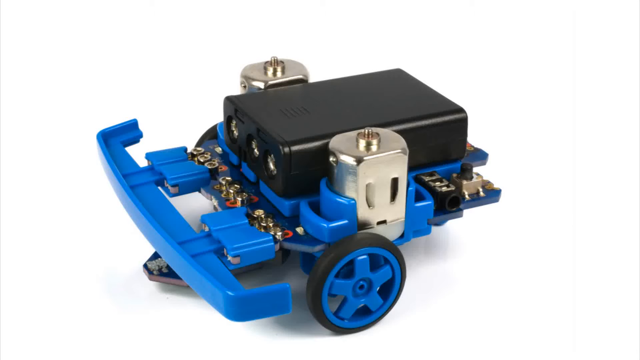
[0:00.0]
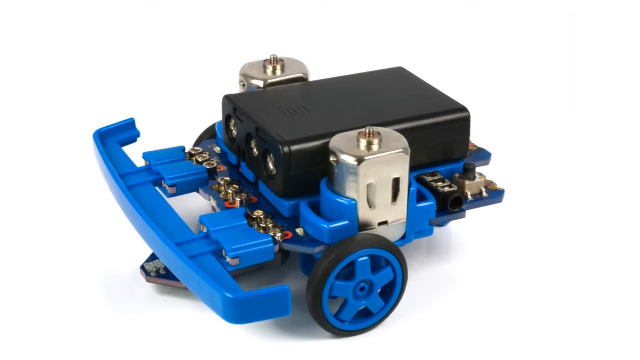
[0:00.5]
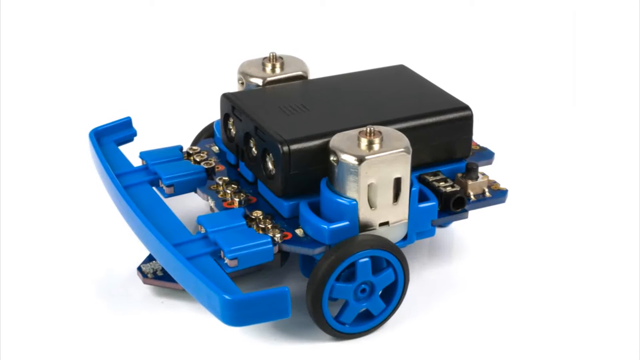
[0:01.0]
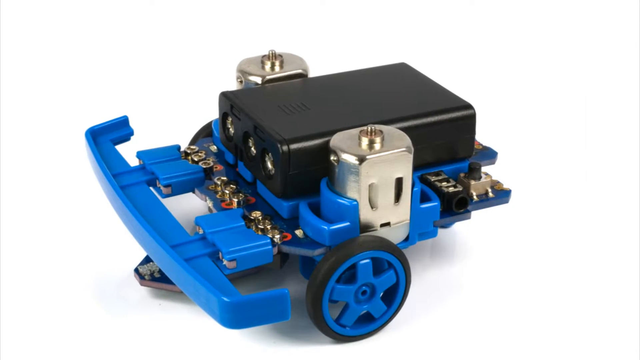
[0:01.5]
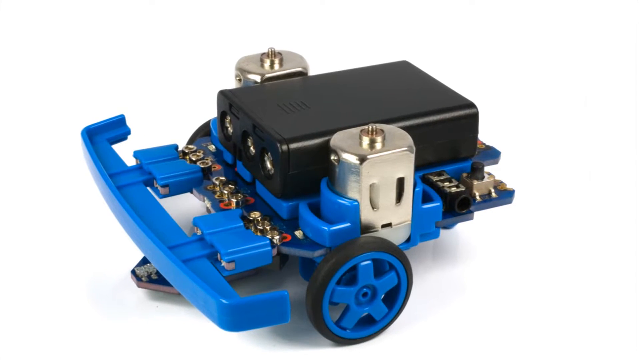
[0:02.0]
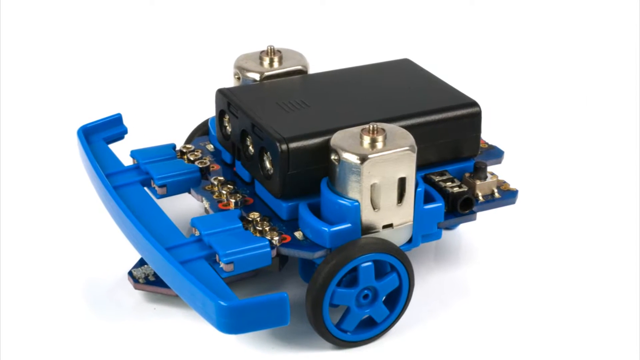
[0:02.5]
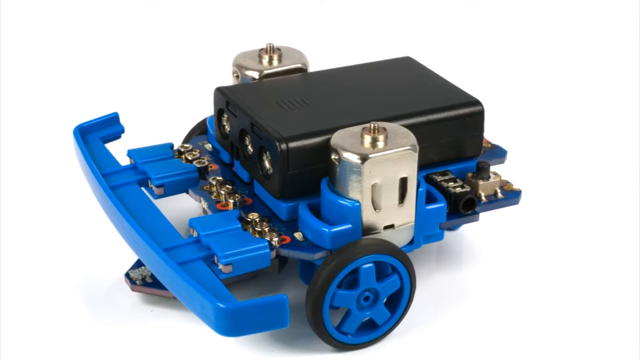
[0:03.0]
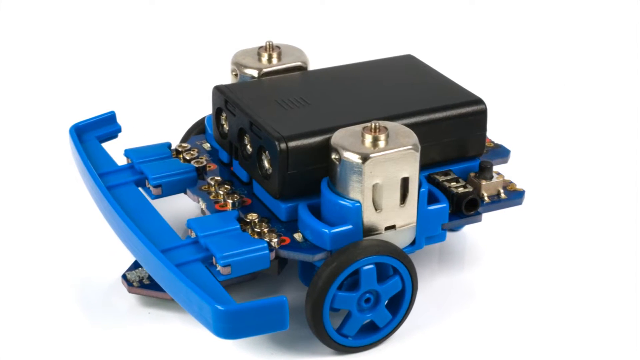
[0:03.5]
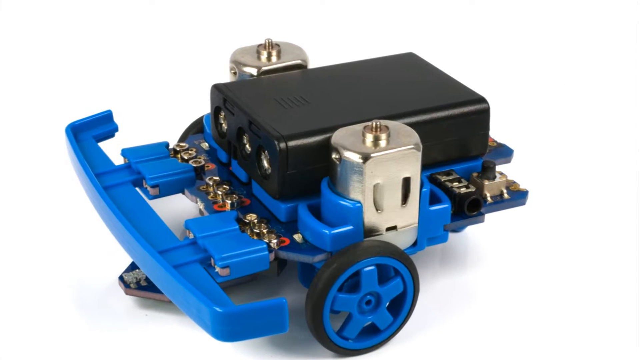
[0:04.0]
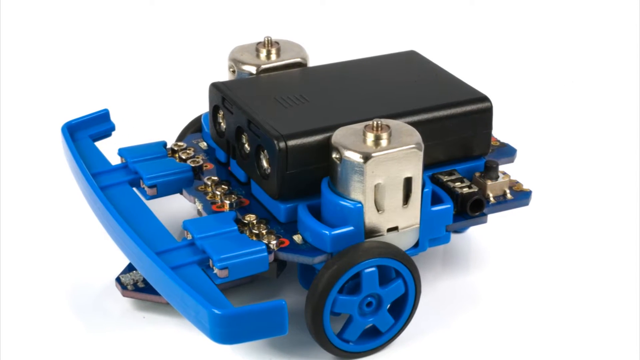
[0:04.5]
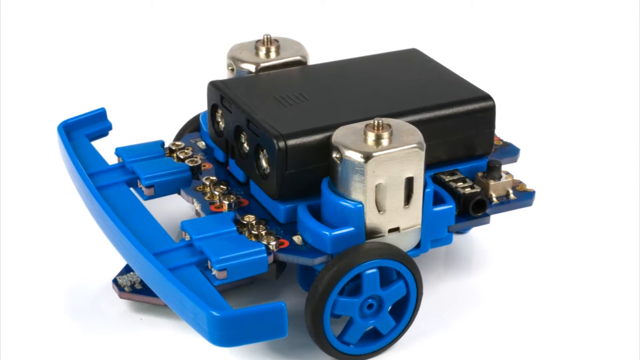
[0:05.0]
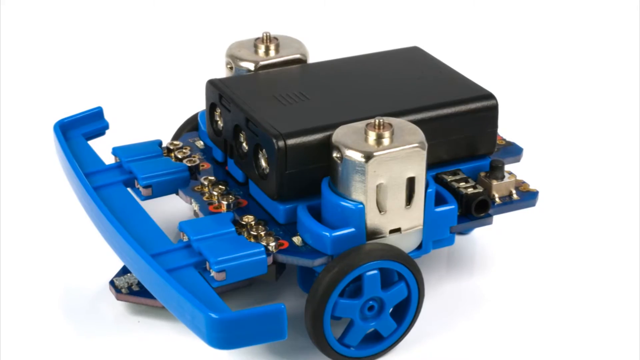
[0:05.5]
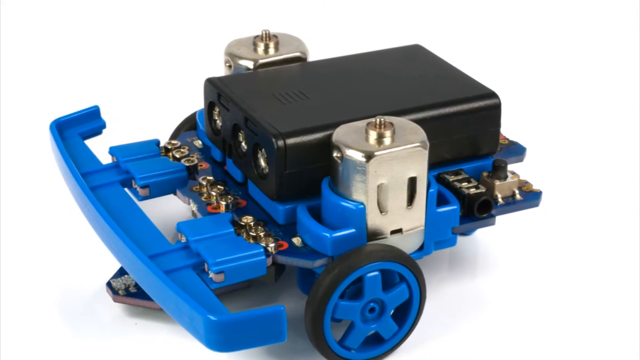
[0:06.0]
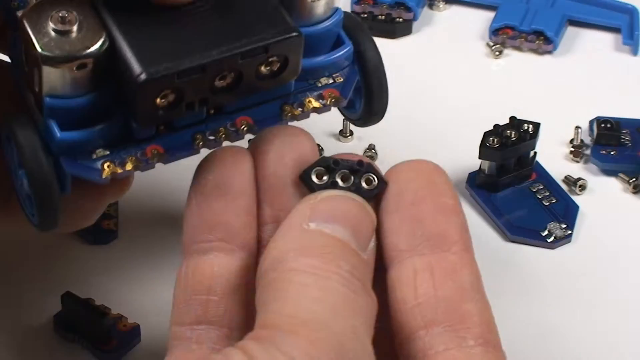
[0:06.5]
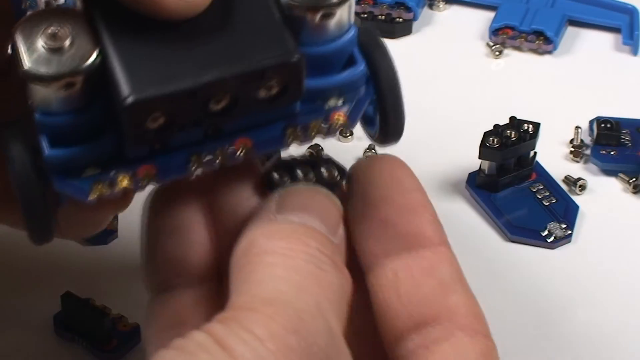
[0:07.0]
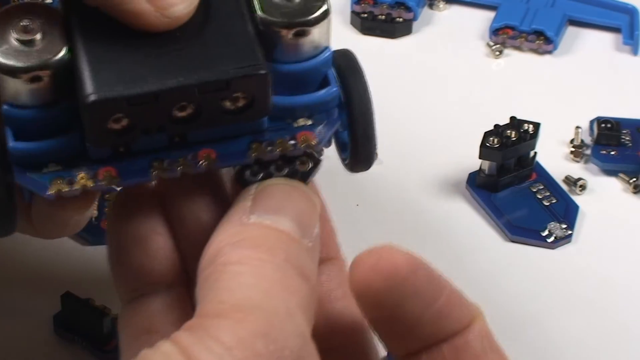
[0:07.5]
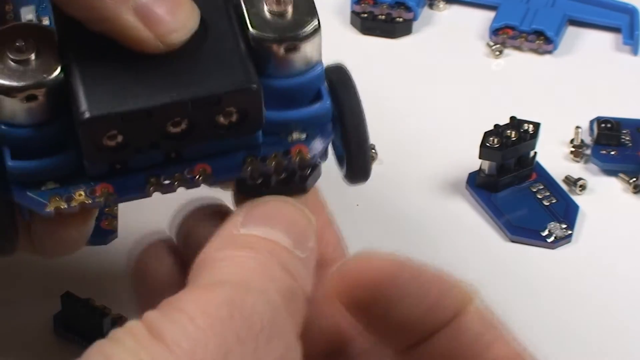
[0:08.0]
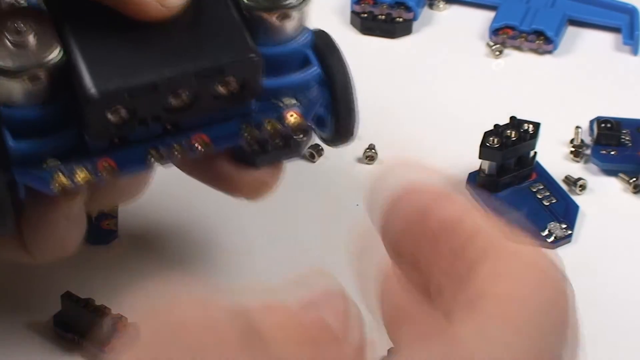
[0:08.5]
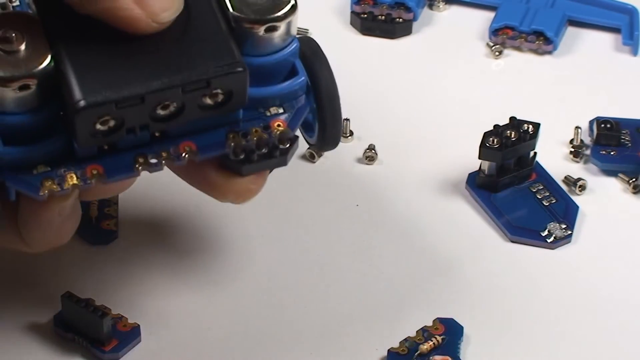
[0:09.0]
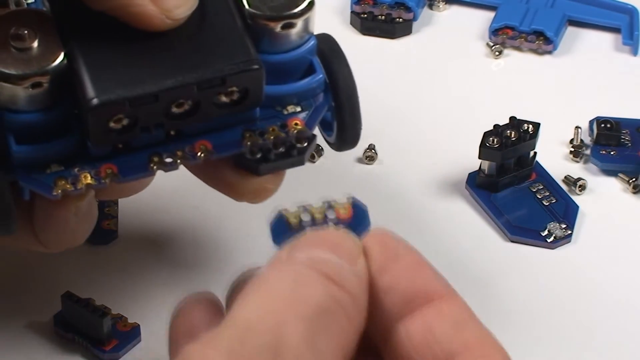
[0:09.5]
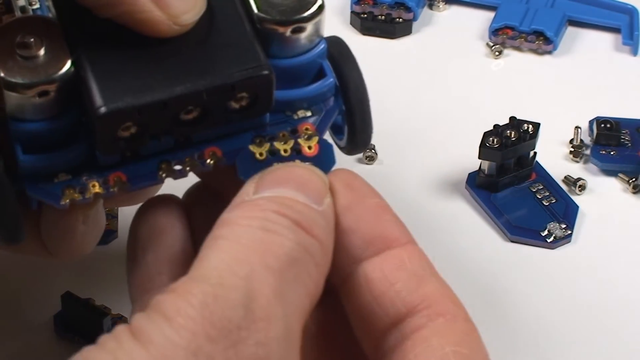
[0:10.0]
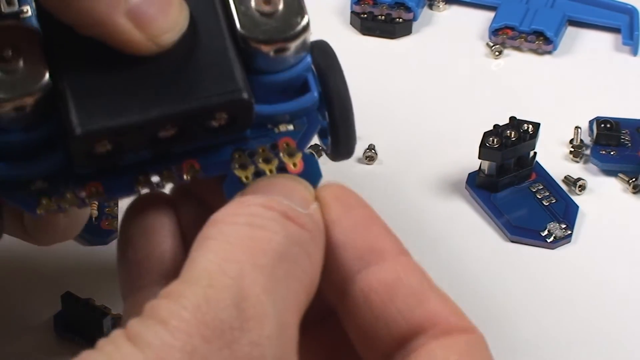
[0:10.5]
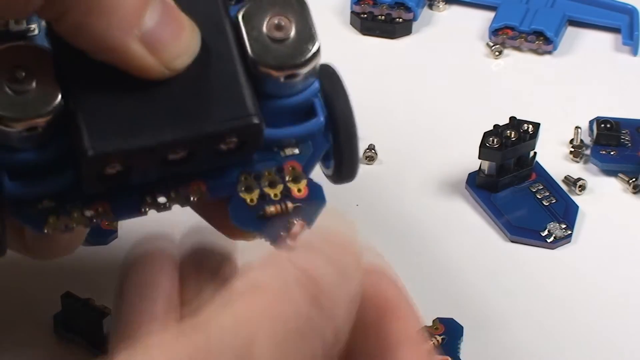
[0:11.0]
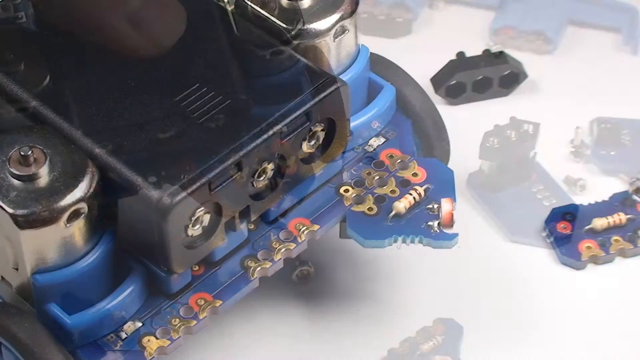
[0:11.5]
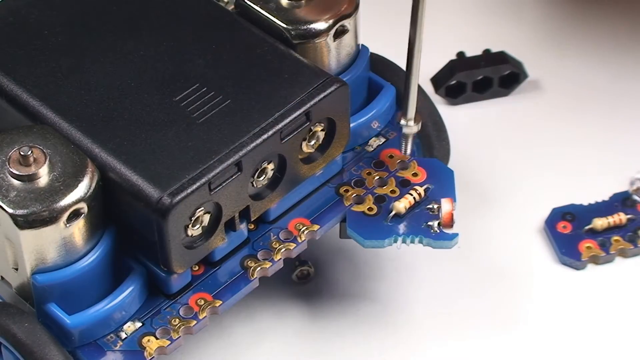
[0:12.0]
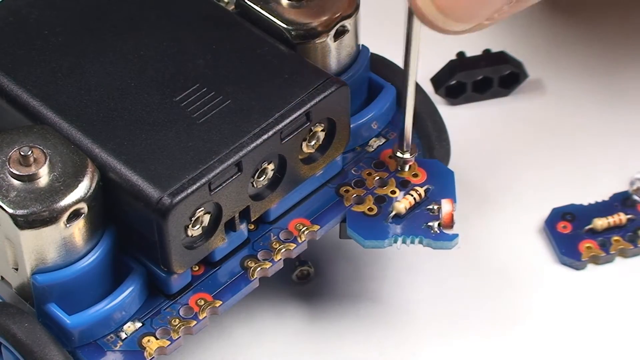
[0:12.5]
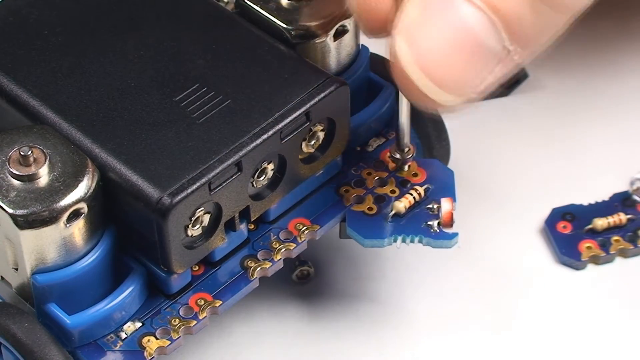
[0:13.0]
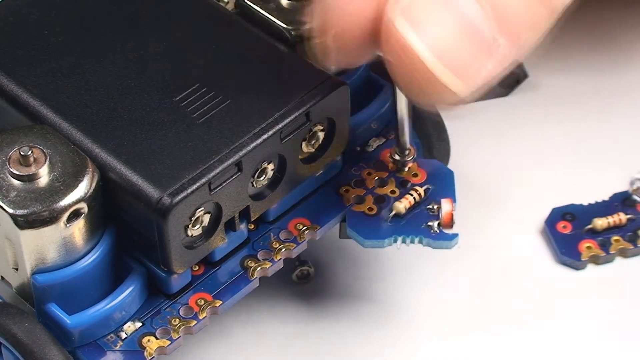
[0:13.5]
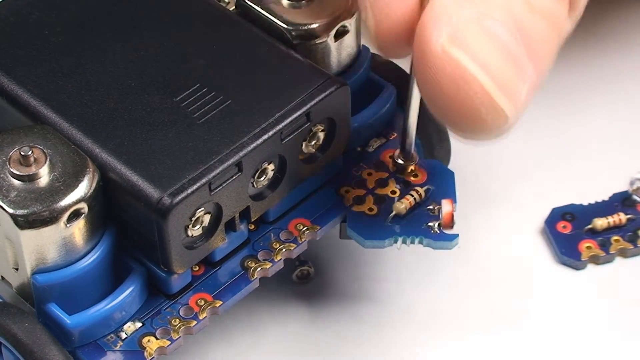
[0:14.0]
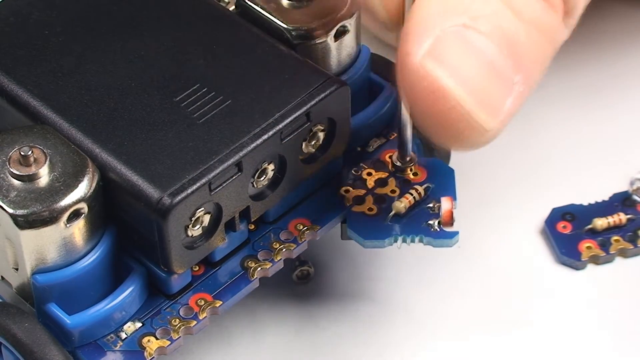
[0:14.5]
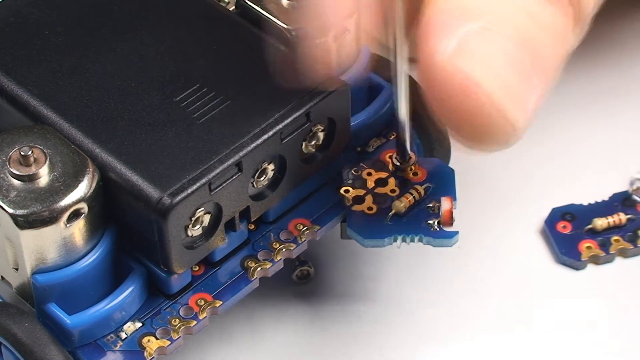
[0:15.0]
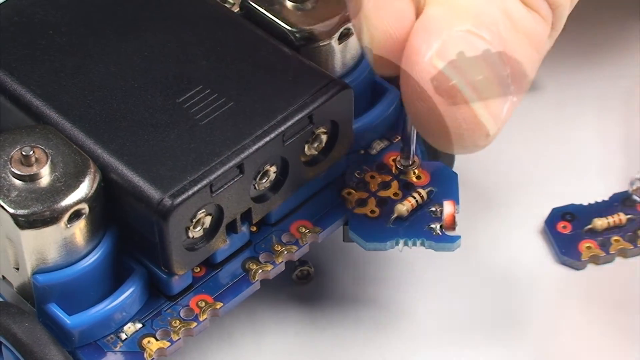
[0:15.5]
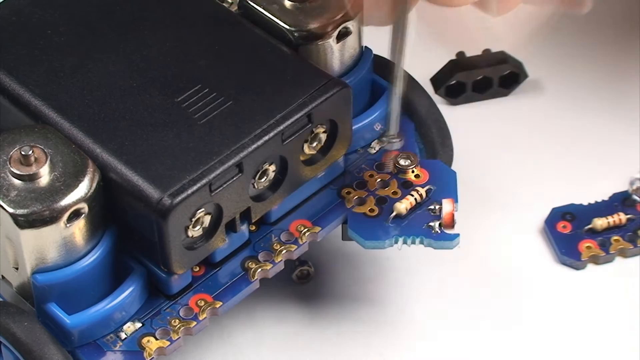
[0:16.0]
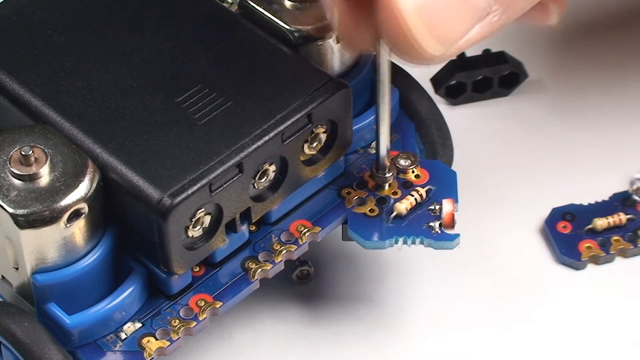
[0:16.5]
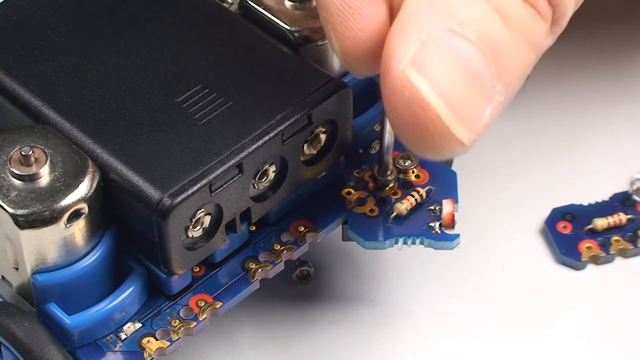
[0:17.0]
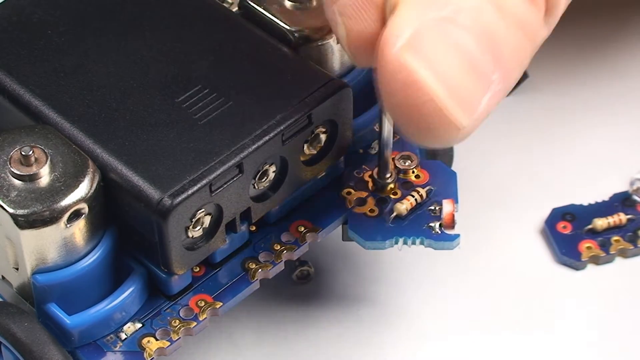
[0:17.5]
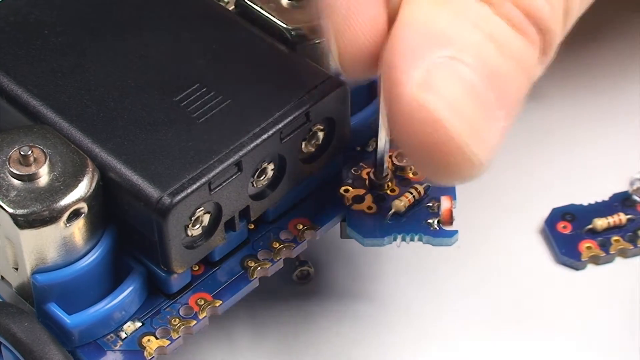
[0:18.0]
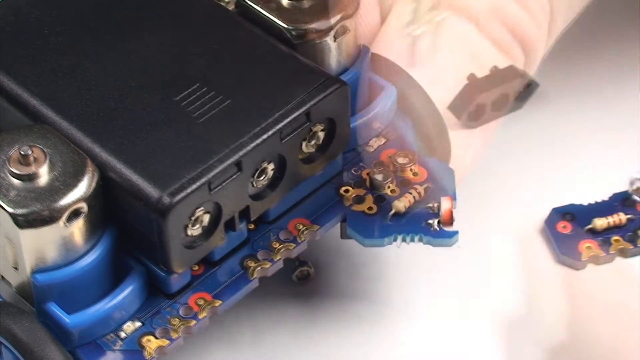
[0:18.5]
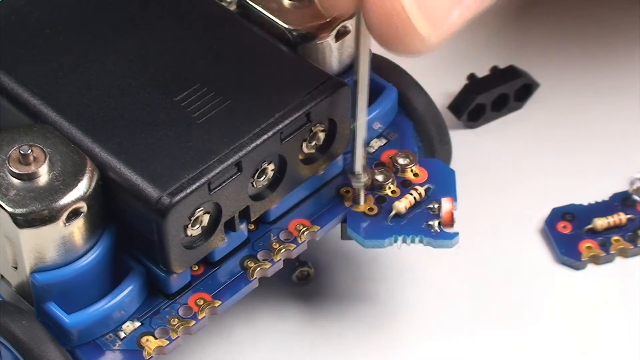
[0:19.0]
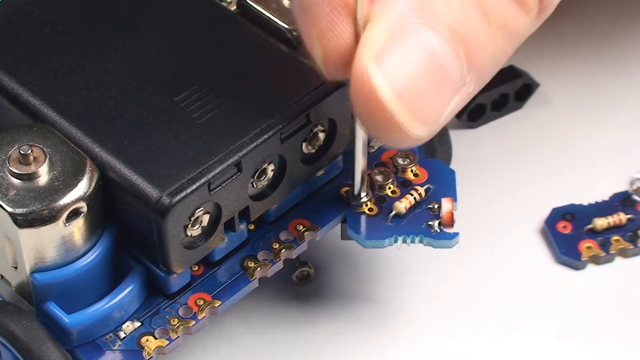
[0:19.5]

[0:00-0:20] A motherboard has some wheels connected to it and a couple of modules screwed onto it. A hand appears near what is an incomplete car, possibly a robotic car. It has two motors next to each wheel, and something that looks like a battery is between the two motors. There is a power button, a blue bumper and blue plastic parts; the wheels are blue and have rubber on them. The battery is black and the motors are silver. There is something that looks like an auxiliary input. Many parts to assemble are next to it, and one screw is still on the surface. The robotic car looks like it has not been powered yet: the battery is not connected to any cables and is just on top of a plastic divider between the motherboard and the battery.